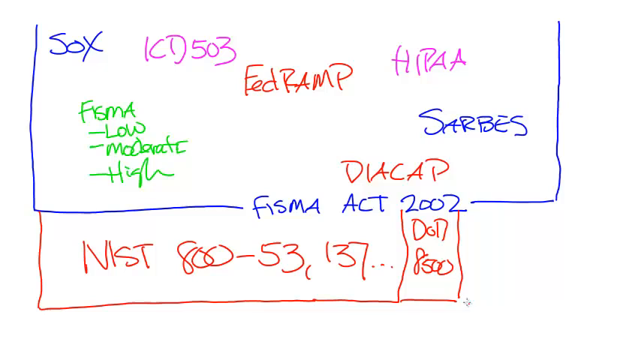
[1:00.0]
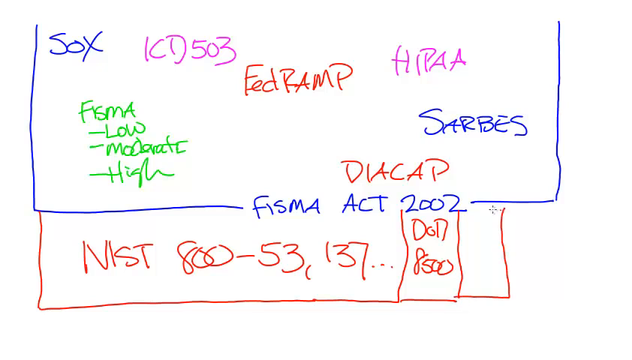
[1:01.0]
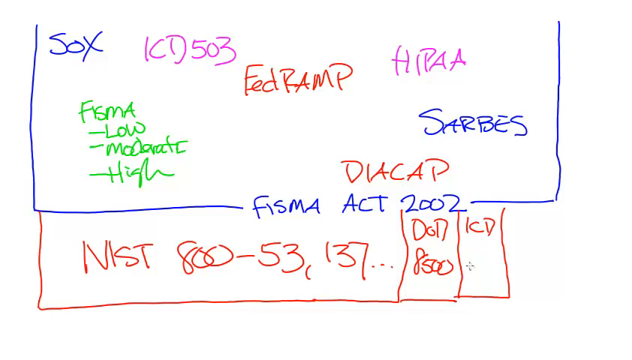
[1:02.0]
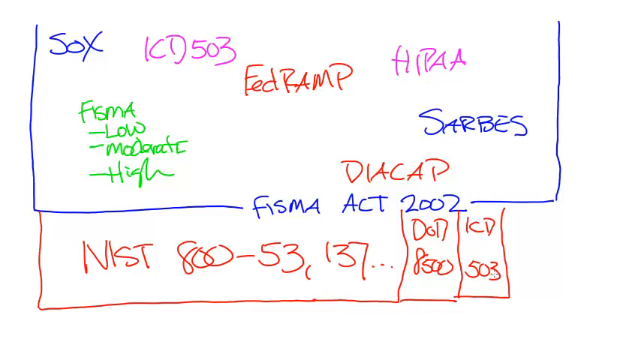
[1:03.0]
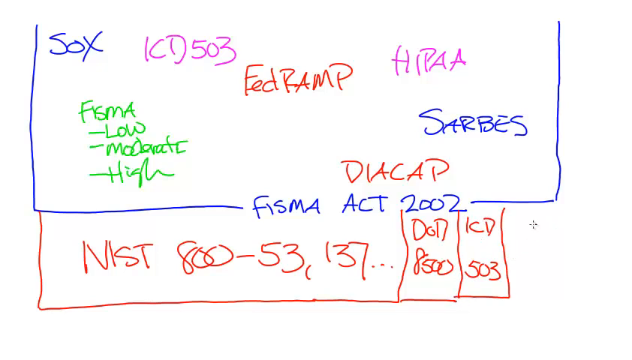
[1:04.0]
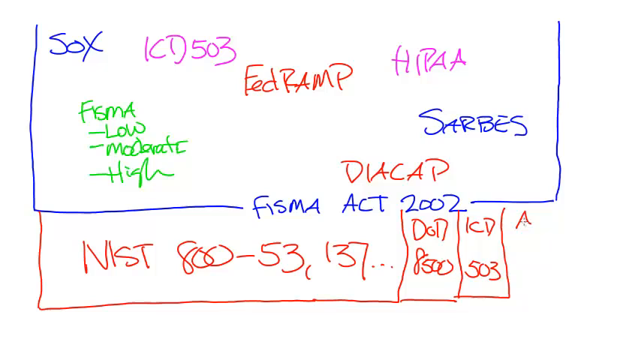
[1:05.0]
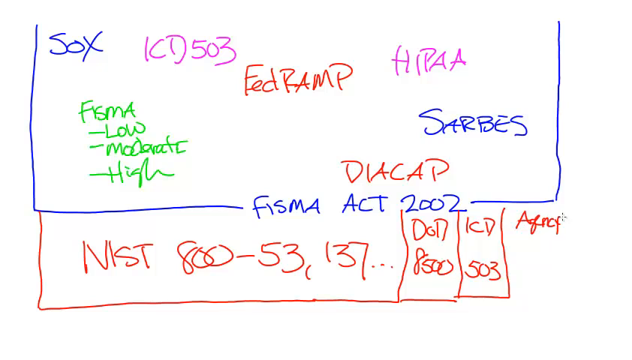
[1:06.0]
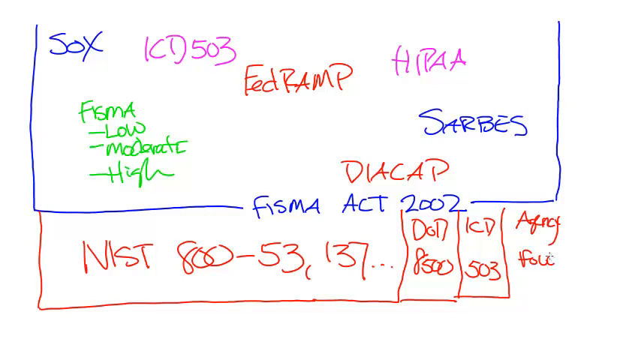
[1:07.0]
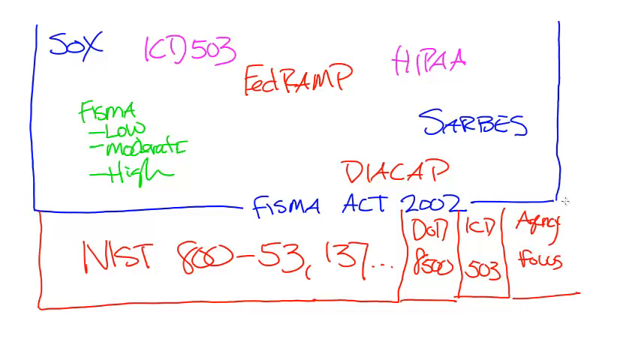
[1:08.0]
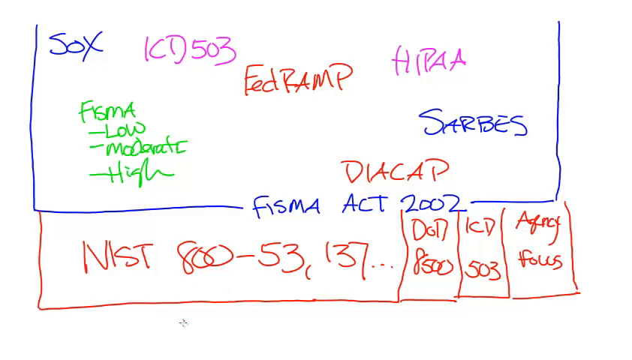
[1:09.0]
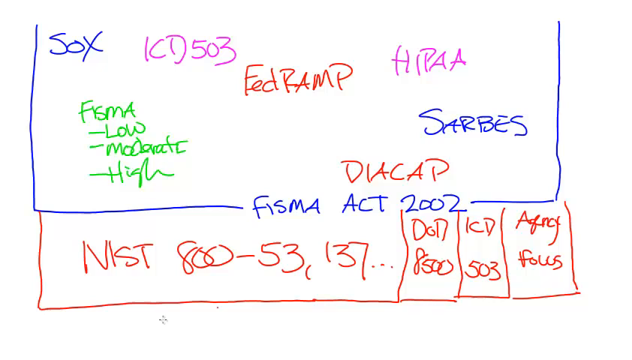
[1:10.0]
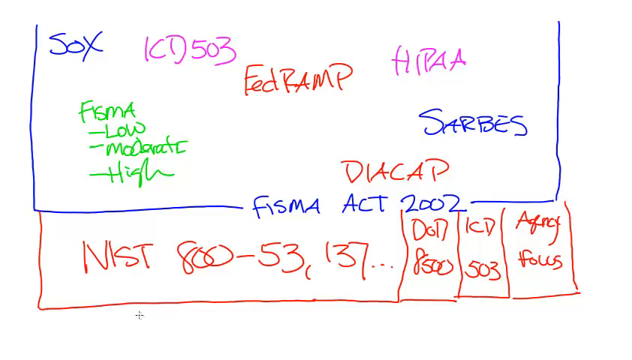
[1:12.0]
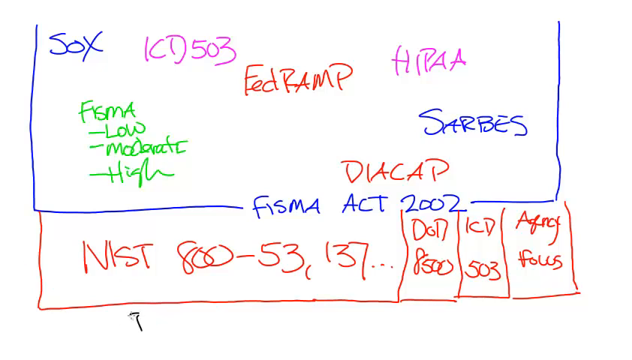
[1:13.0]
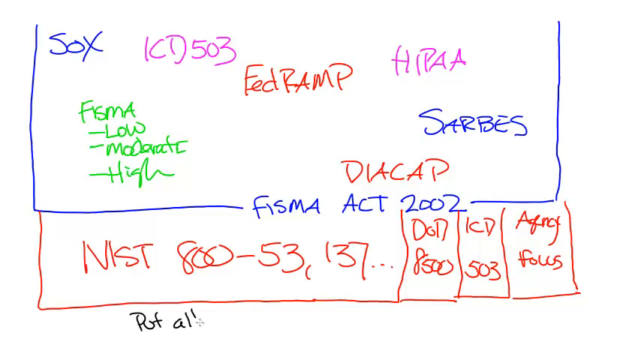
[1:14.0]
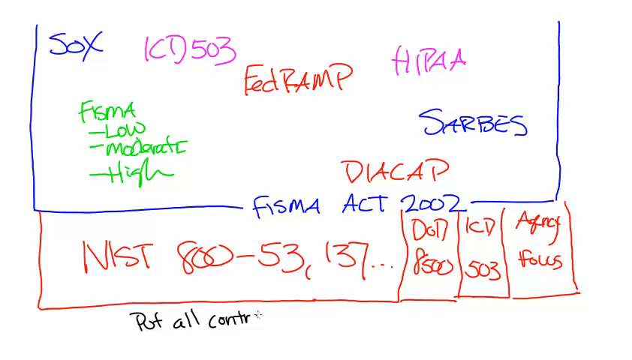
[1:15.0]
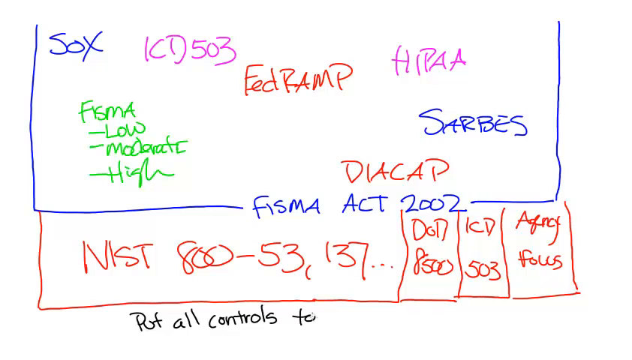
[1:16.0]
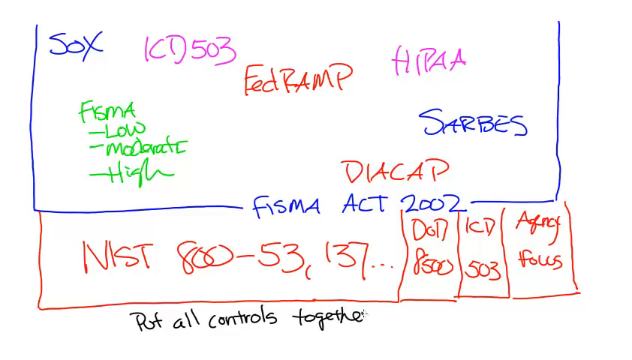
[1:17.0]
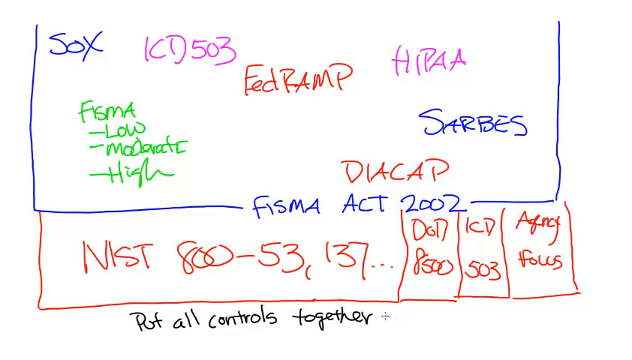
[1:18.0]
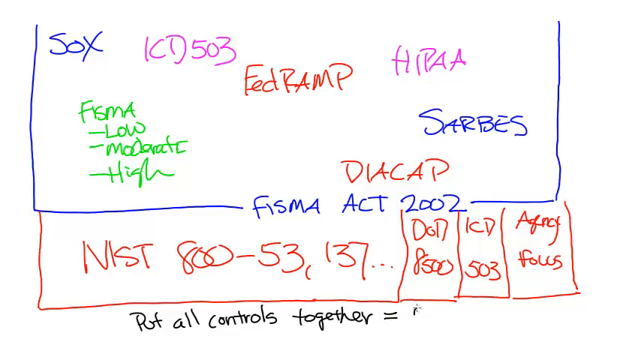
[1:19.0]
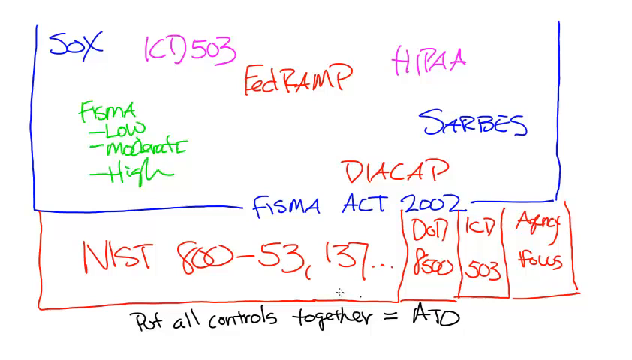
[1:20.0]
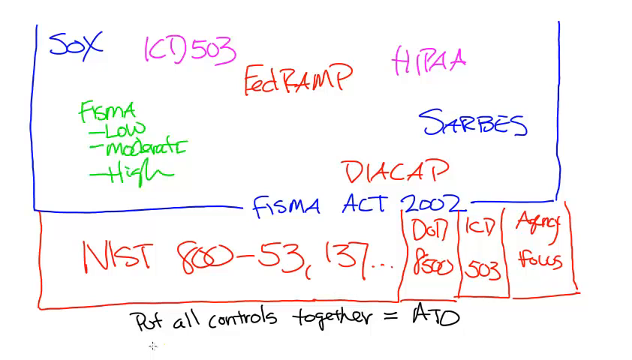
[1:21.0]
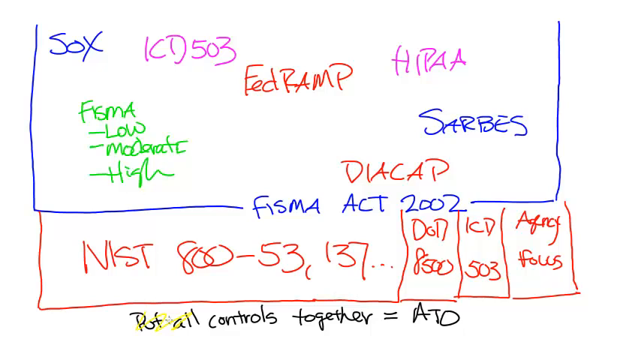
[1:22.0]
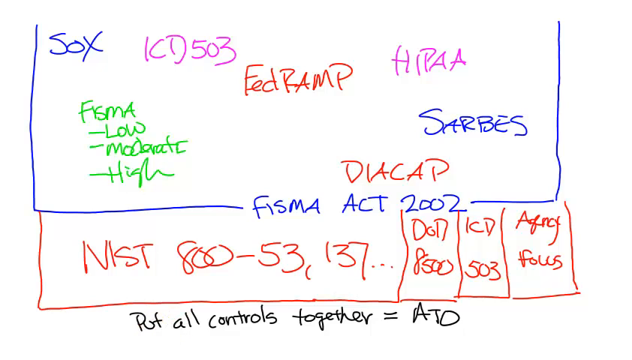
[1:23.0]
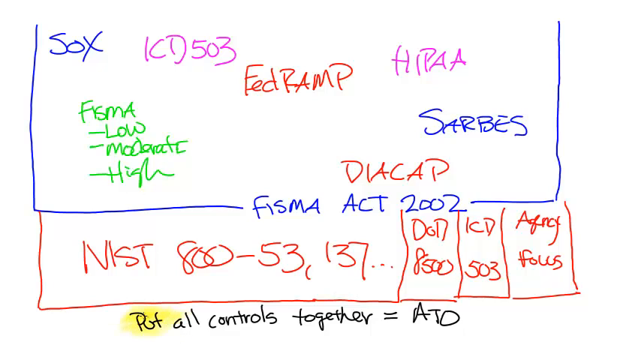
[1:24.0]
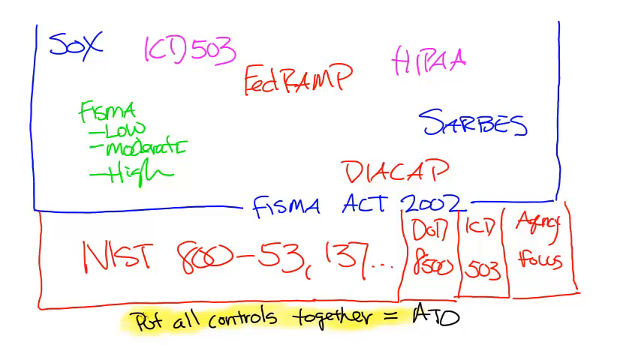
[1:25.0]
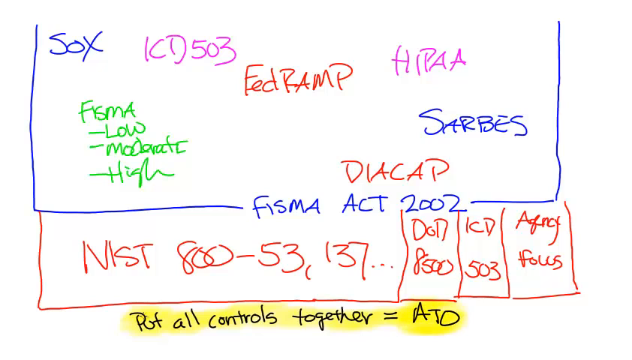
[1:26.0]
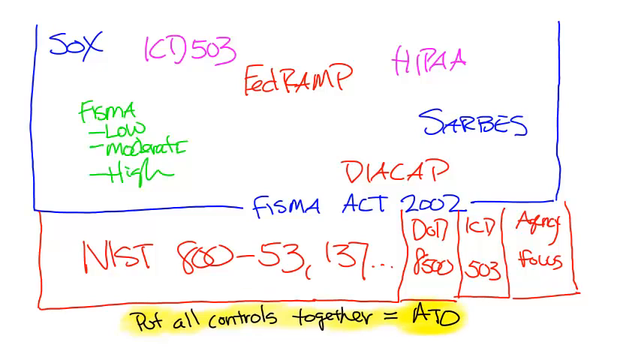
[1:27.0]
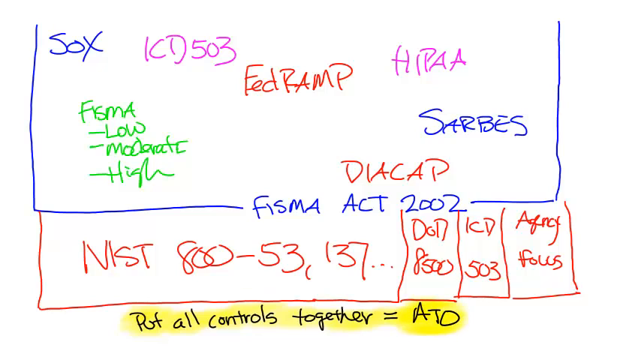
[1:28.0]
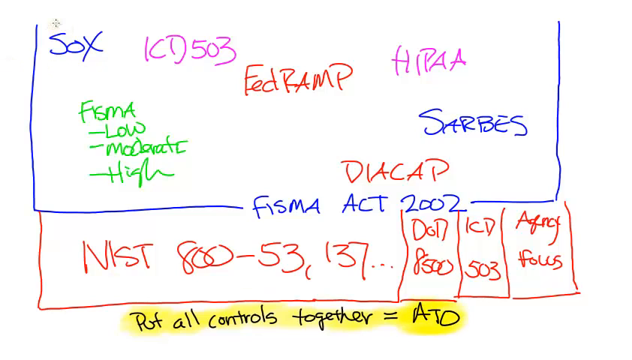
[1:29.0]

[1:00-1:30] The red line continues along the bottom toward the right, forming another small box of similar size, slightly longer, and the line is then drawn upward to meet the blue line above it. Inside that small box the pointer writes "ICD" with "503" beneath it. It then moves to the right of the line, around where "ICD" was written, and writes "agency FOLL5". It draws a line across the bottom meeting the other lines, and a line from the top of the red lines down to meet the bottom red line. The pointer then moves to the left of the screen, under the red line on the left, and writes in black "put all controls together, equals ATO". It highlights this black text in yellow with a left-to-right motion, then goes to the top left of the blue square and begins highlighting in orange with a downward-right diagonal motion, not yet finishing the section.